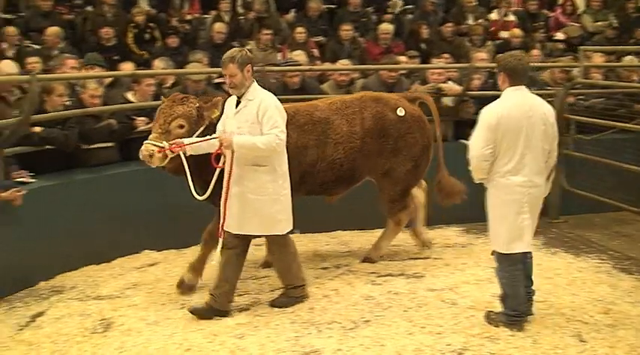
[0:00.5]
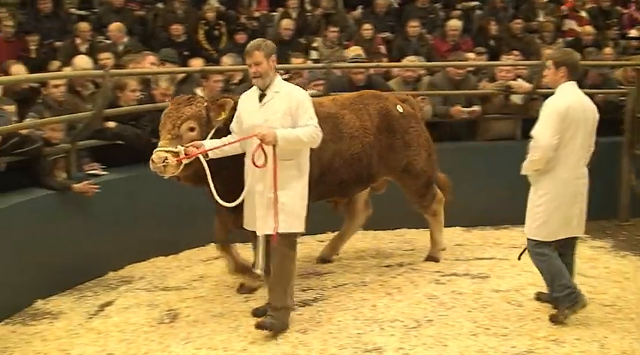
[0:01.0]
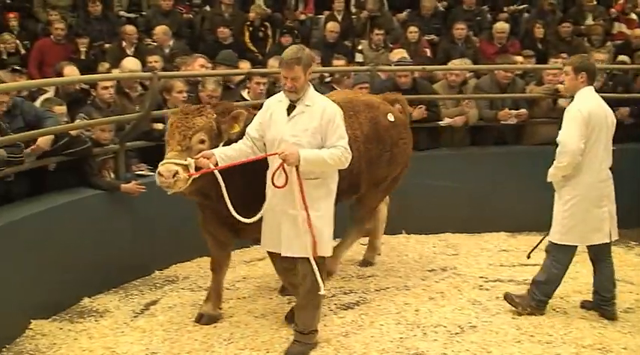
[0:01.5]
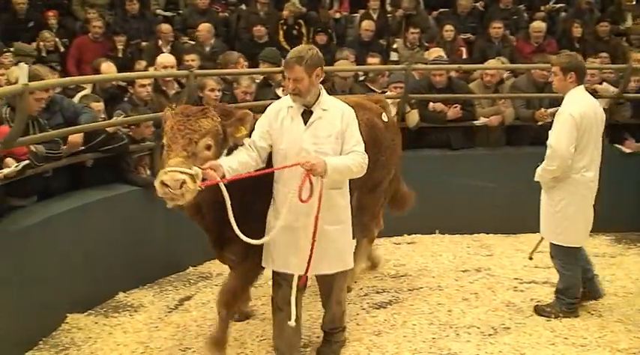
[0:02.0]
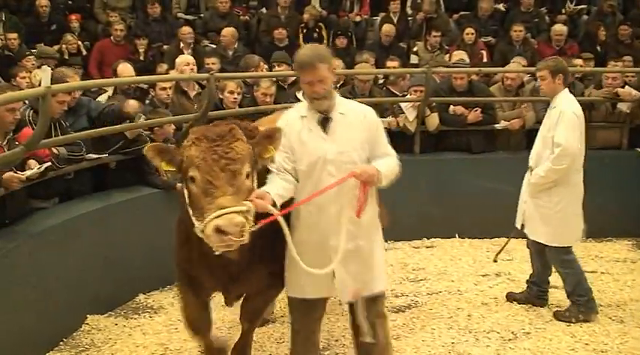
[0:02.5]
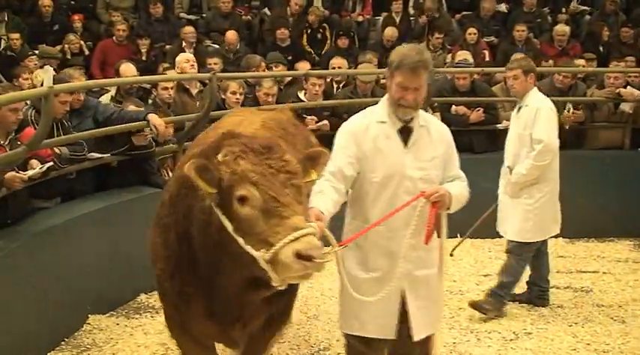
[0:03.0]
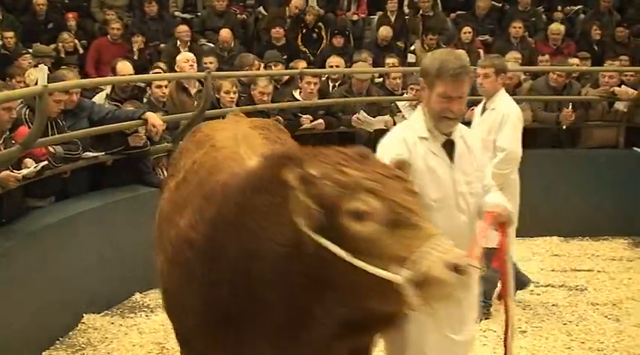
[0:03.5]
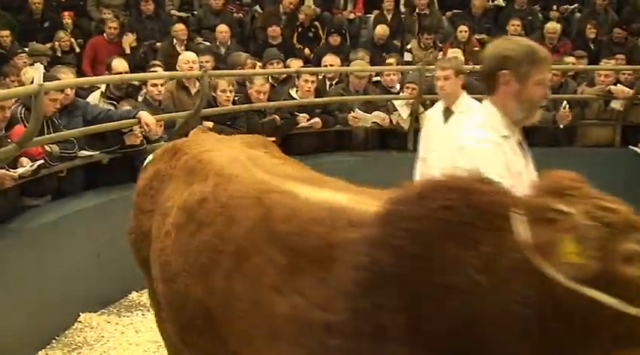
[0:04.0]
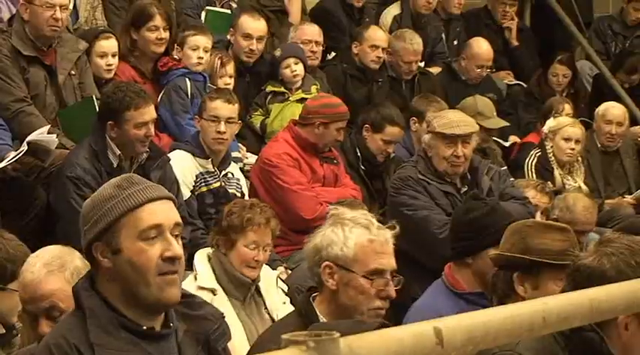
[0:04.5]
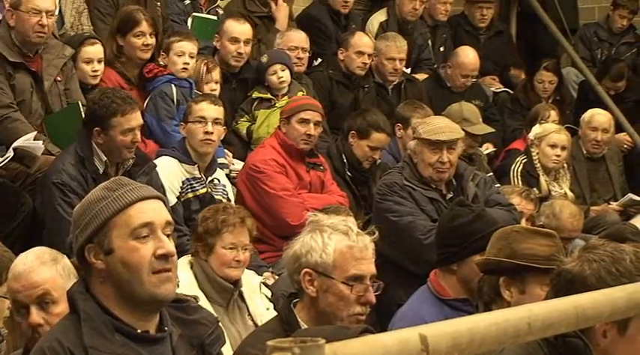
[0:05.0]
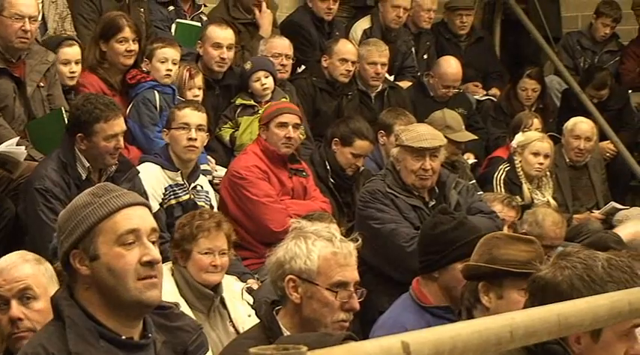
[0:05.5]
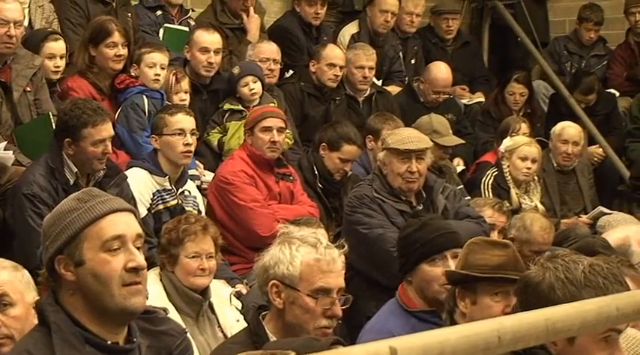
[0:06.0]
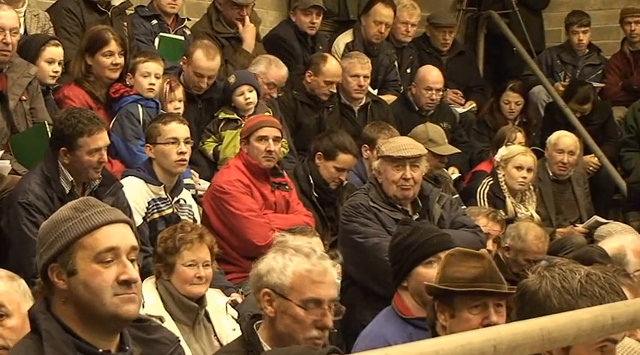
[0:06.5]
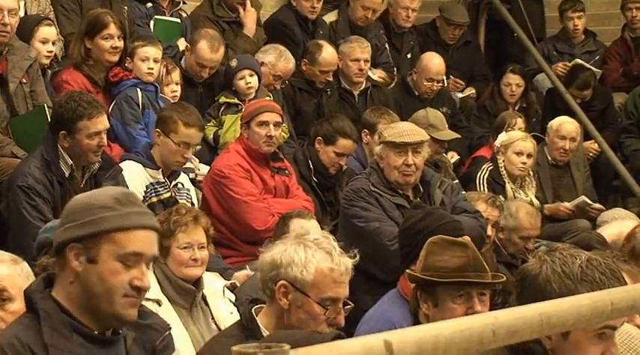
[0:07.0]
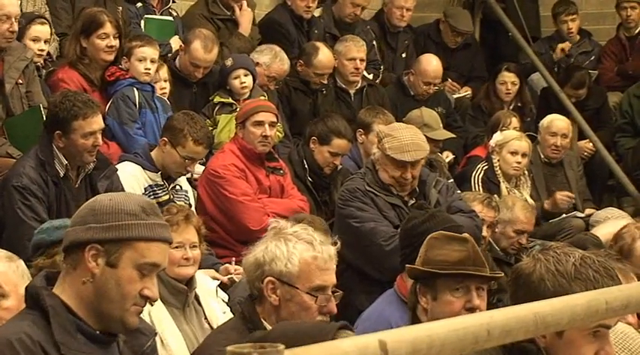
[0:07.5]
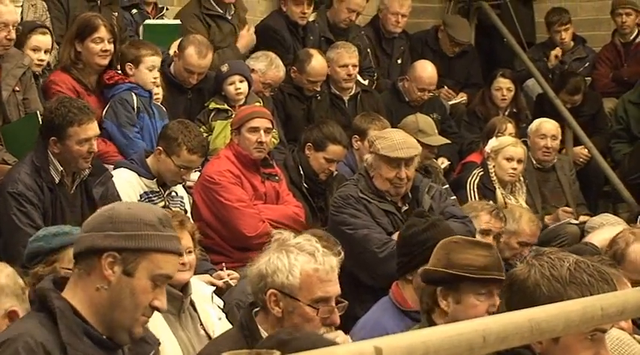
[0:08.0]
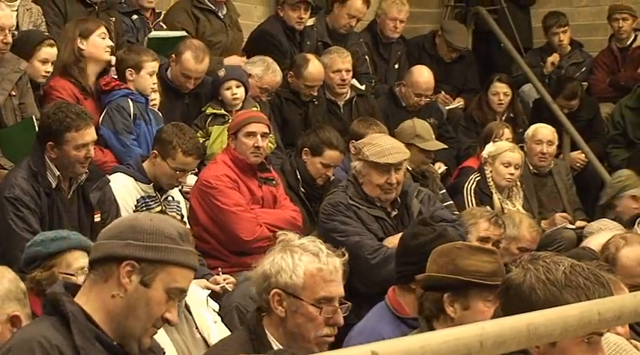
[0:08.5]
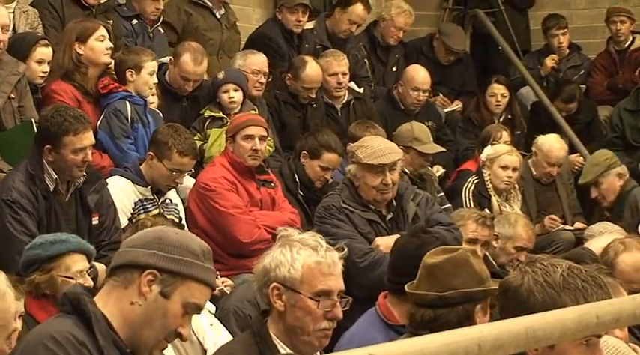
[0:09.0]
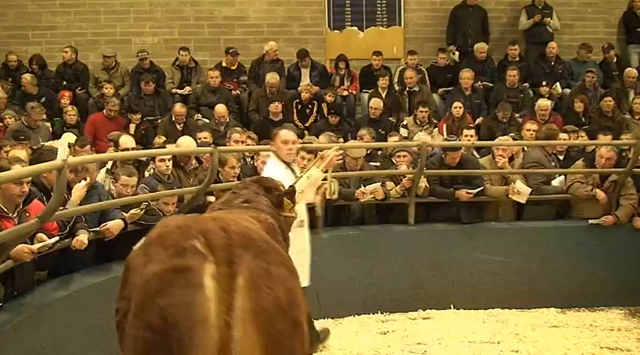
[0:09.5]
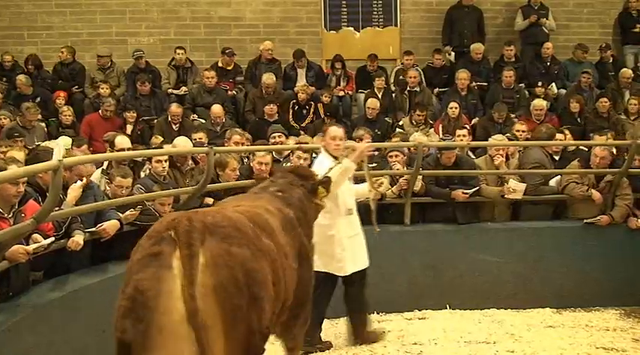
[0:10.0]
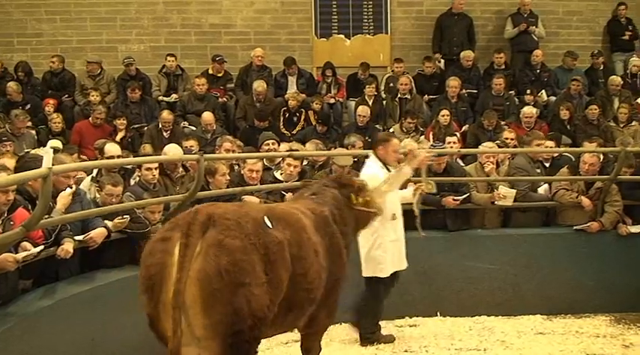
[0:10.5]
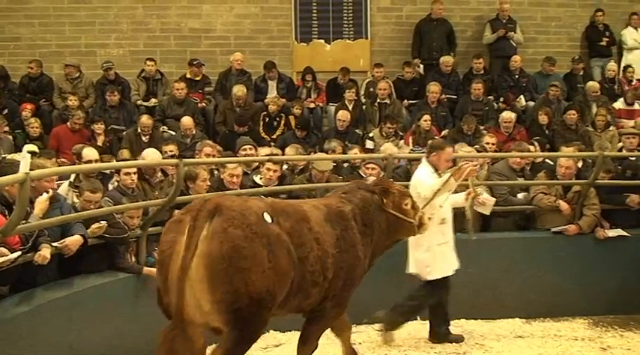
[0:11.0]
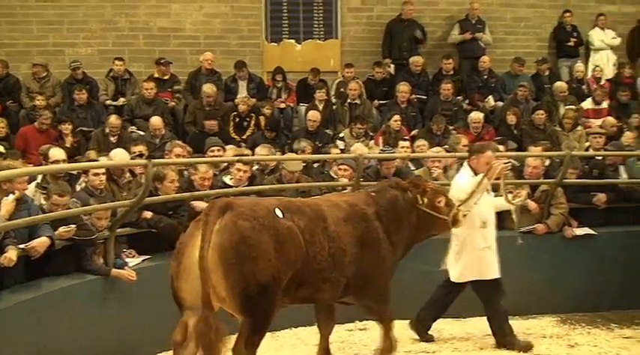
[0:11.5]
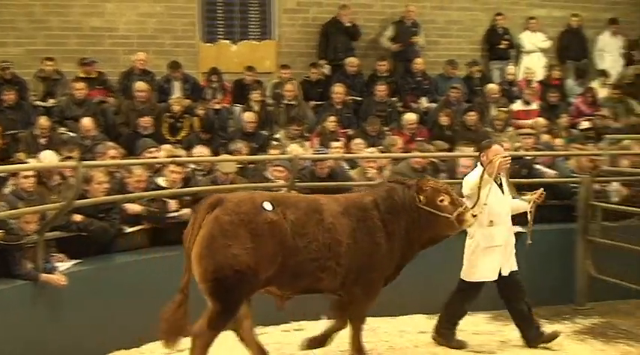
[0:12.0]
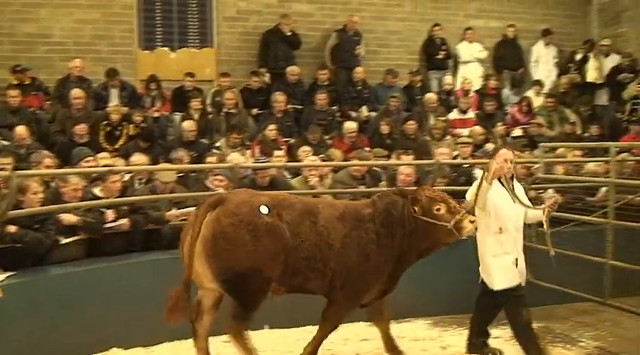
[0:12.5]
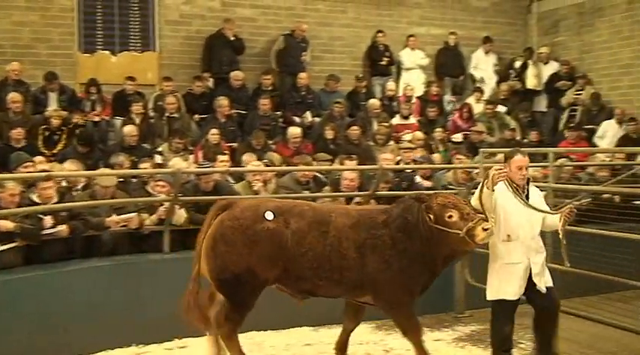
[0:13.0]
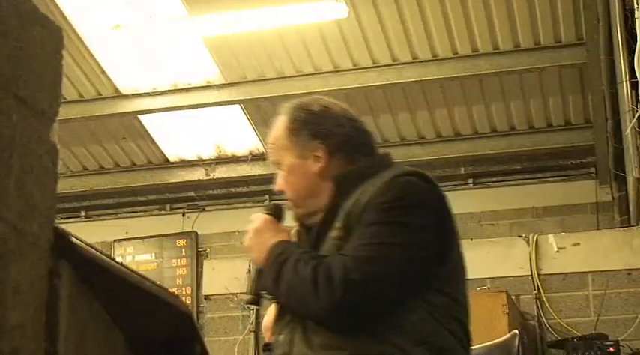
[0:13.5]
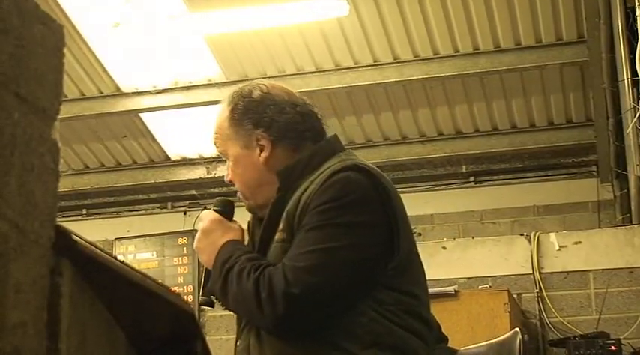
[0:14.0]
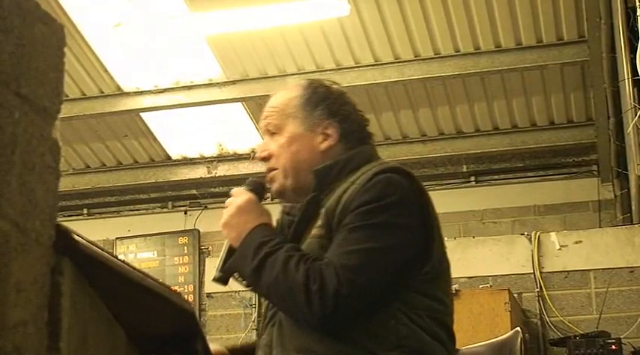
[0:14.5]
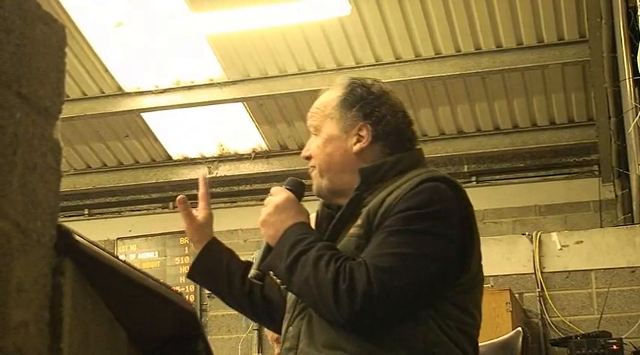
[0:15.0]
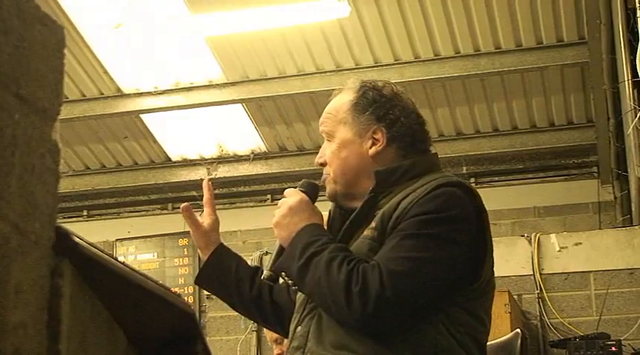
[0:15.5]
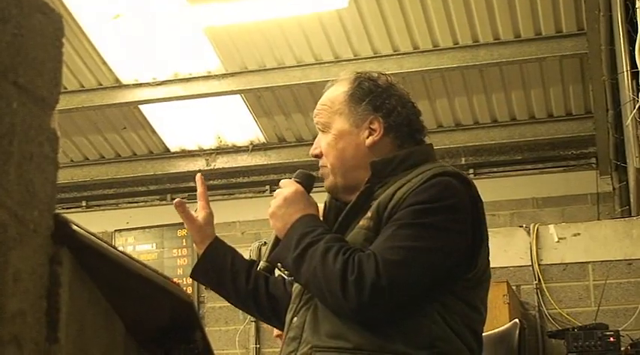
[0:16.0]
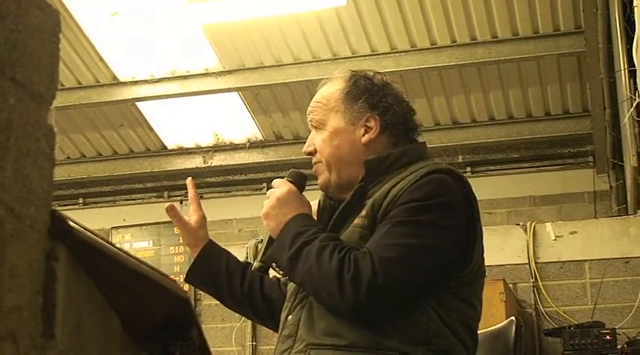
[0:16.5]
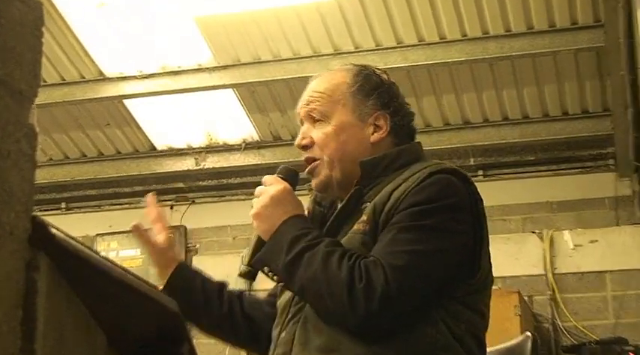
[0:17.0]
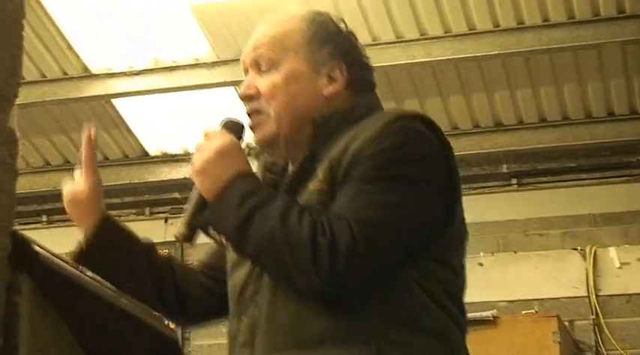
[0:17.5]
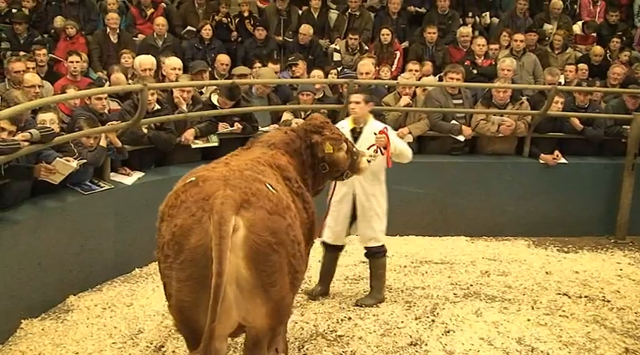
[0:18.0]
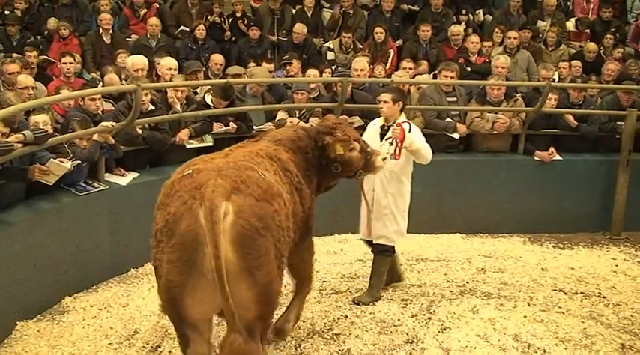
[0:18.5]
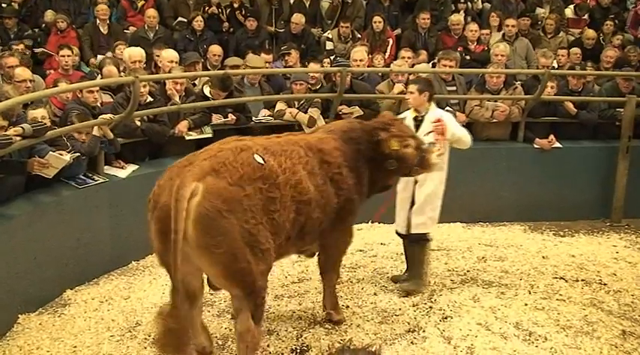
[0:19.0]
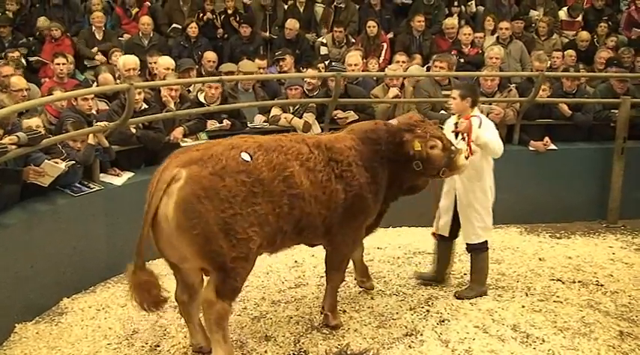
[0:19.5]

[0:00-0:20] A couple of men in white coats walk a cow around what looks to be an enclosure or a little arena. The audience watching the cow go around is large and packed; most of the people wear jackets, suggesting it is cool, and many wear hats as well. The crowd is primarily men, with a few women among them. They appear to be watching, and some of them are taking notes about the cow. A gentleman with a microphone holds up his hand and talks; he looks like an auctioneer, and the cow appears to be being auctioned. The cow looks relatively young and seems to have thicker, curlier fur rather than straighter, narrower fur. It walks behind the man without much problem.